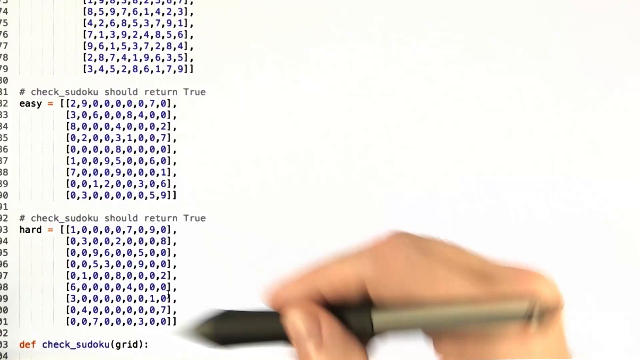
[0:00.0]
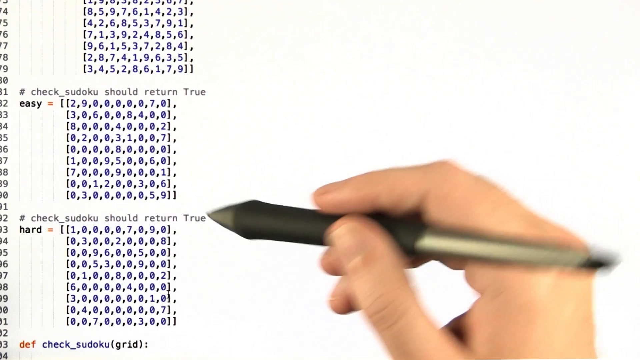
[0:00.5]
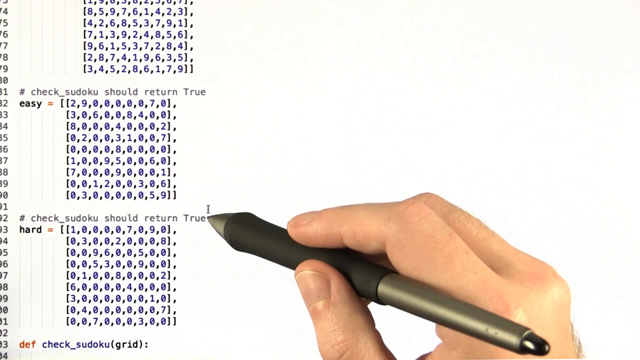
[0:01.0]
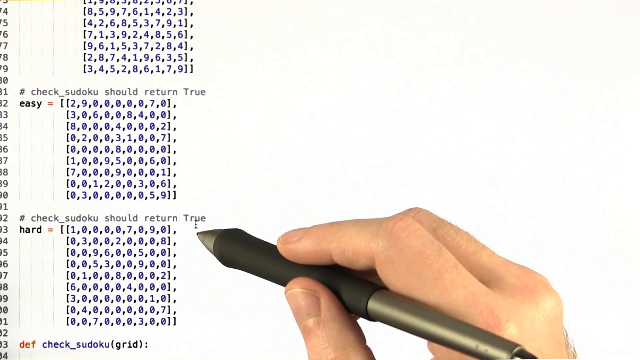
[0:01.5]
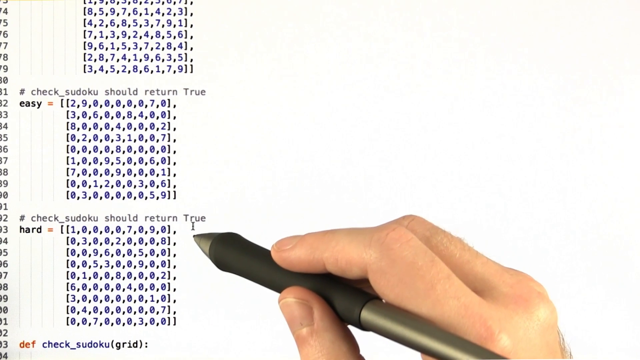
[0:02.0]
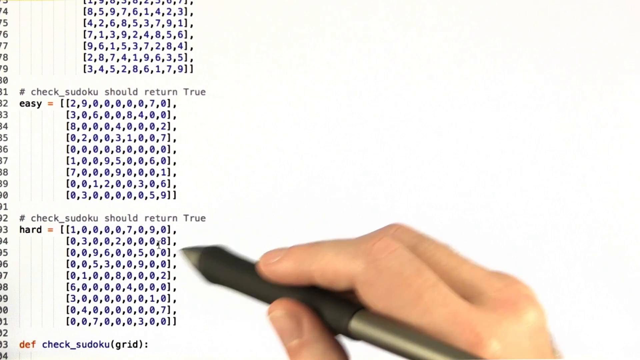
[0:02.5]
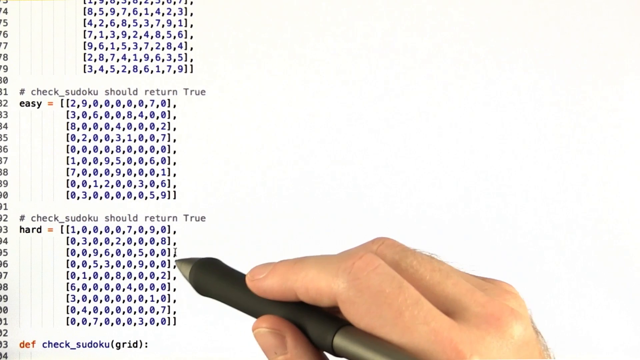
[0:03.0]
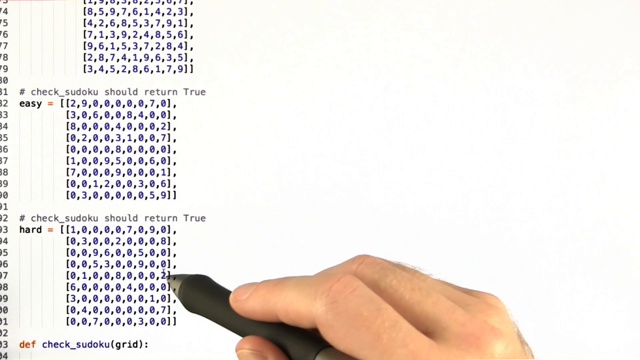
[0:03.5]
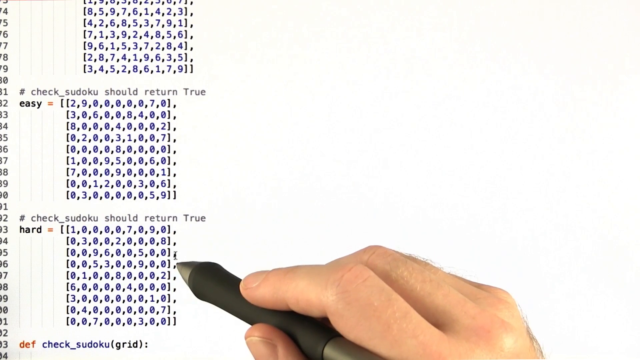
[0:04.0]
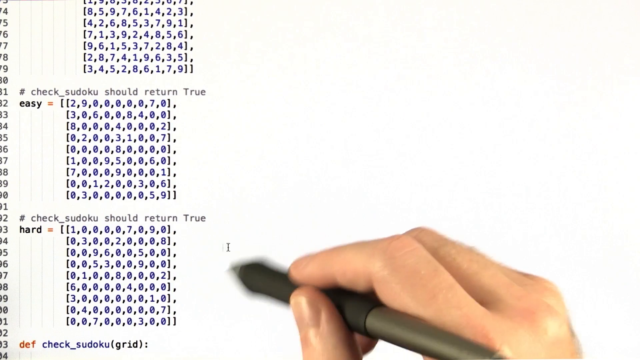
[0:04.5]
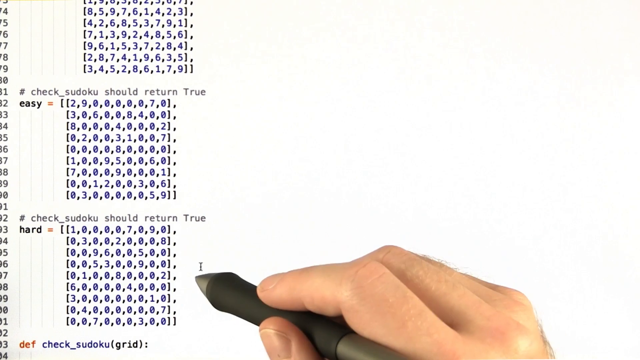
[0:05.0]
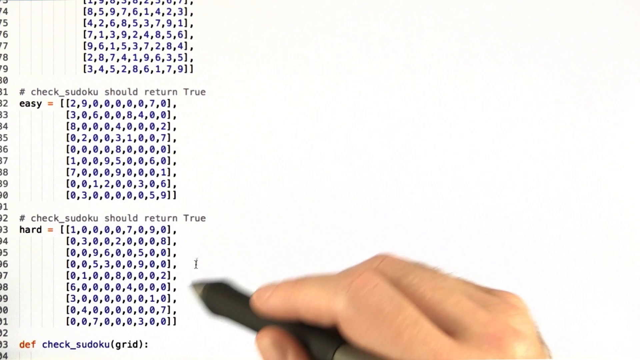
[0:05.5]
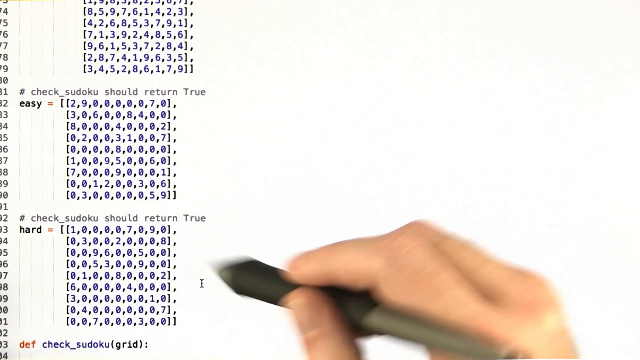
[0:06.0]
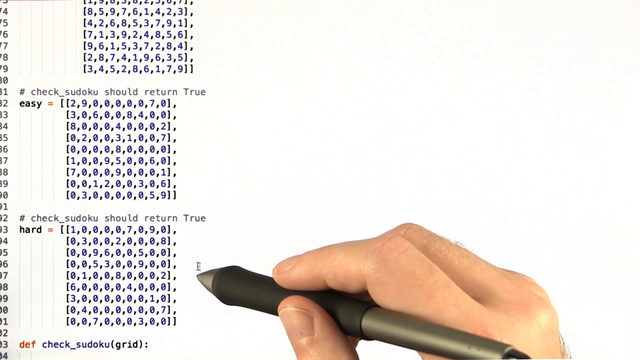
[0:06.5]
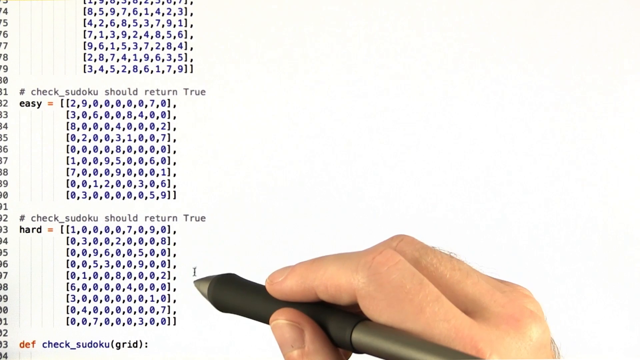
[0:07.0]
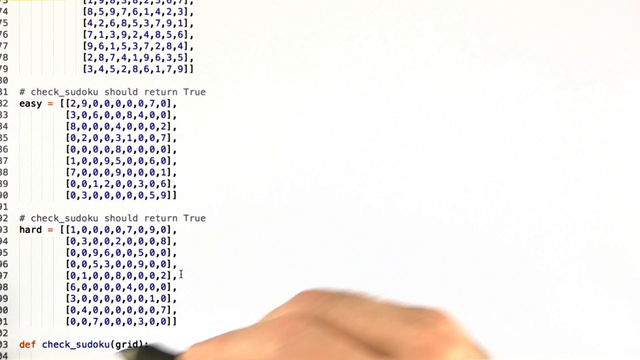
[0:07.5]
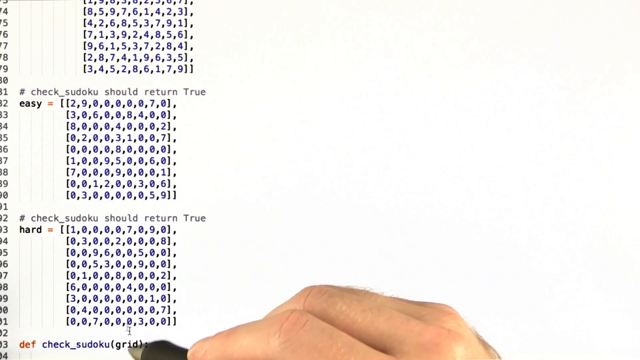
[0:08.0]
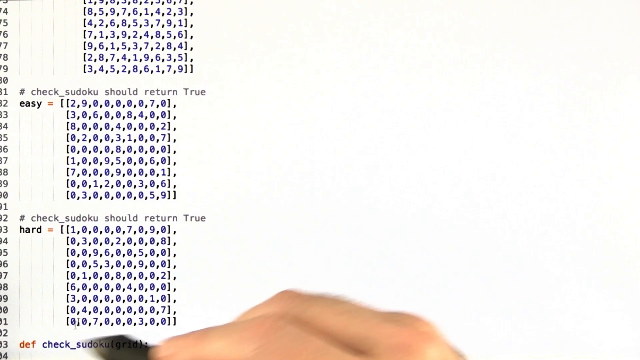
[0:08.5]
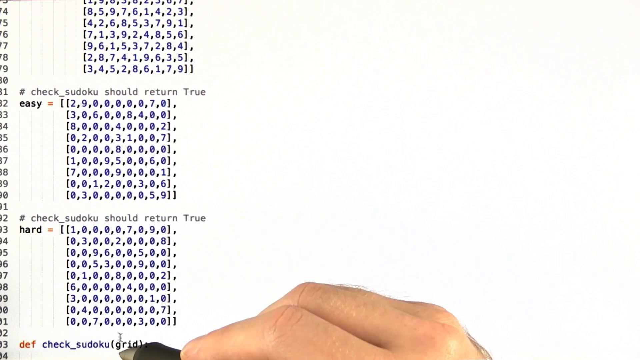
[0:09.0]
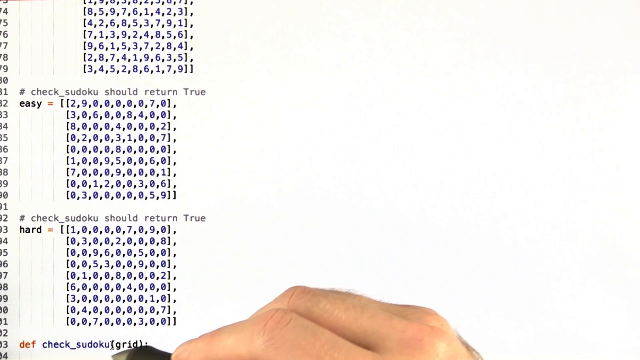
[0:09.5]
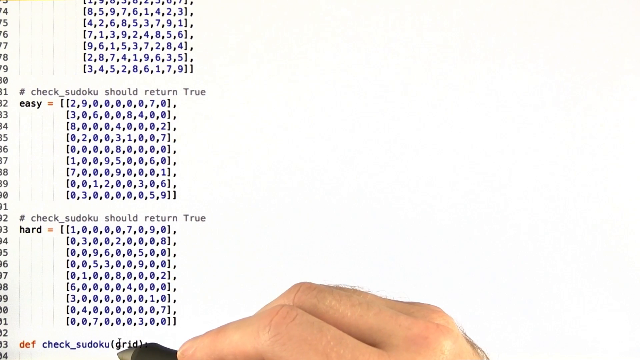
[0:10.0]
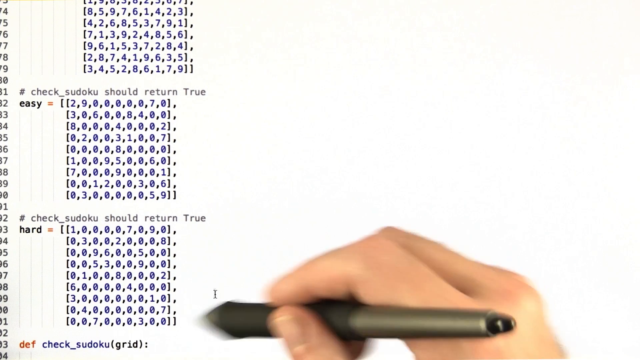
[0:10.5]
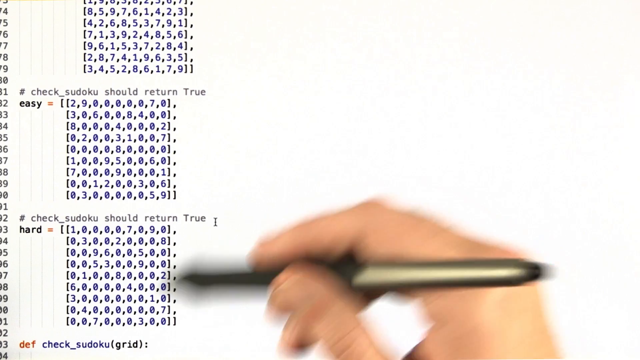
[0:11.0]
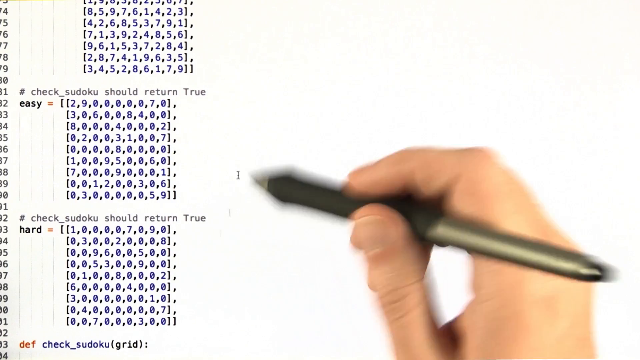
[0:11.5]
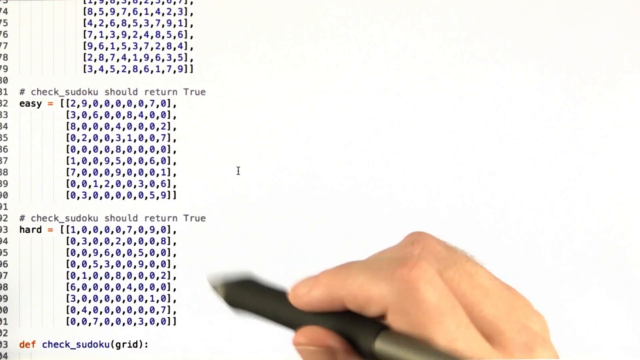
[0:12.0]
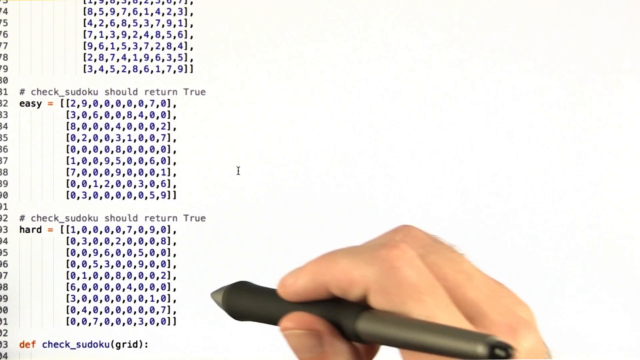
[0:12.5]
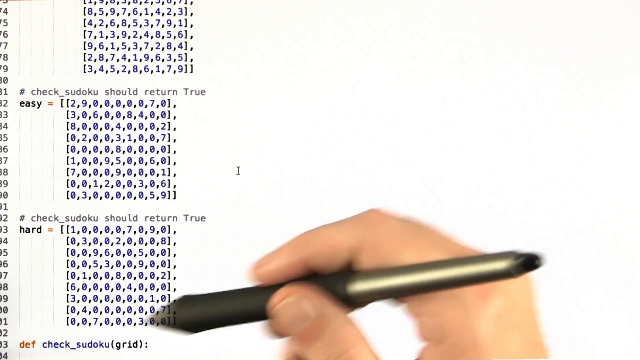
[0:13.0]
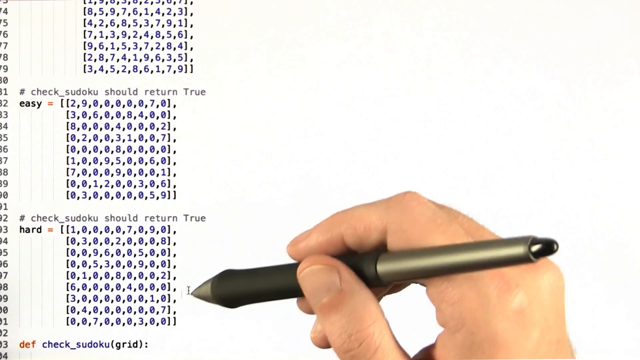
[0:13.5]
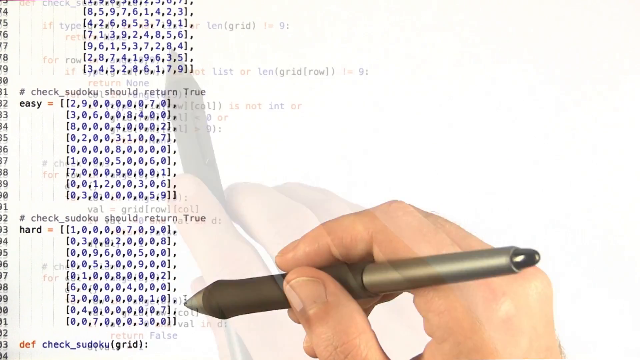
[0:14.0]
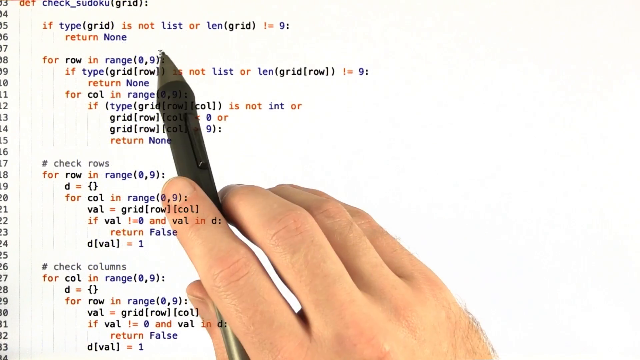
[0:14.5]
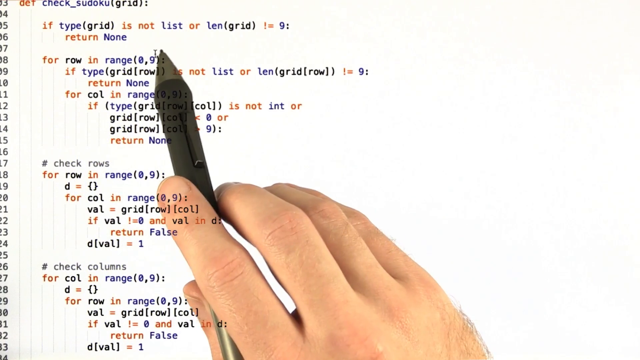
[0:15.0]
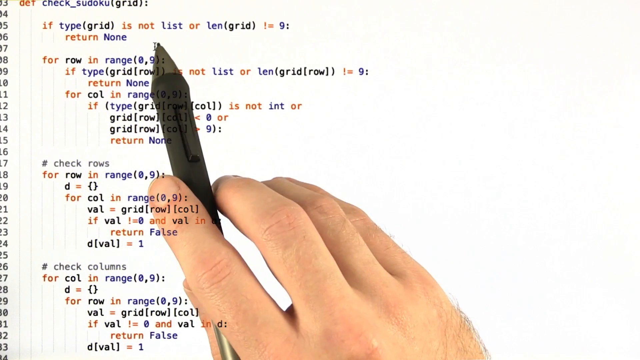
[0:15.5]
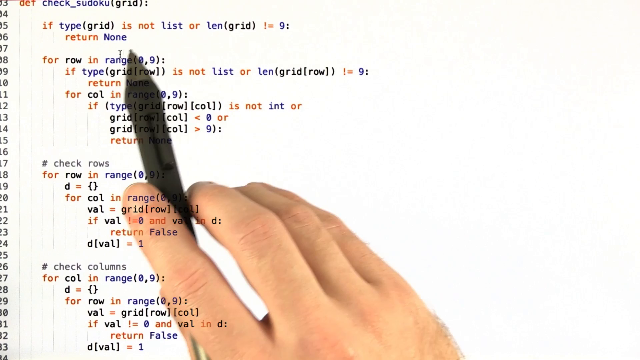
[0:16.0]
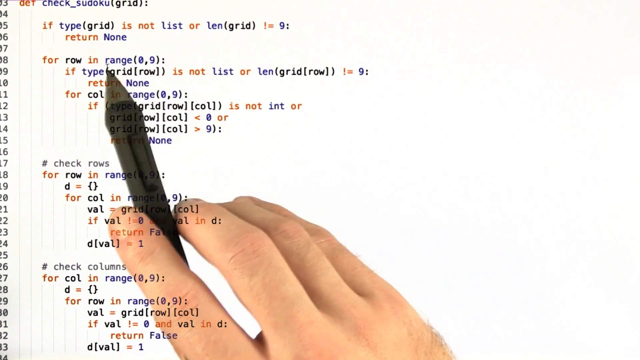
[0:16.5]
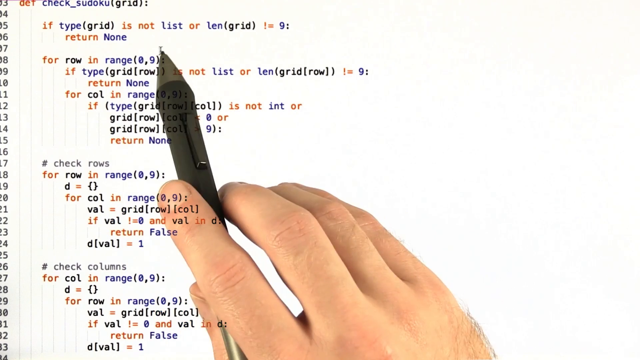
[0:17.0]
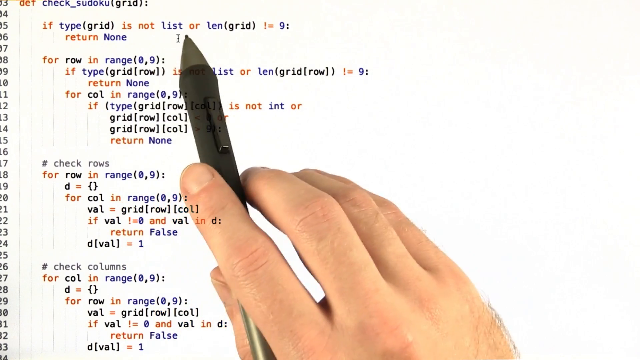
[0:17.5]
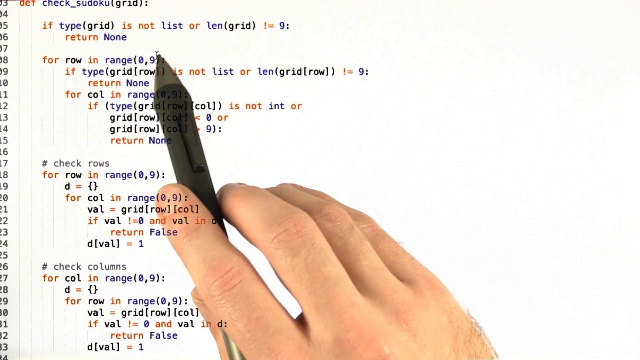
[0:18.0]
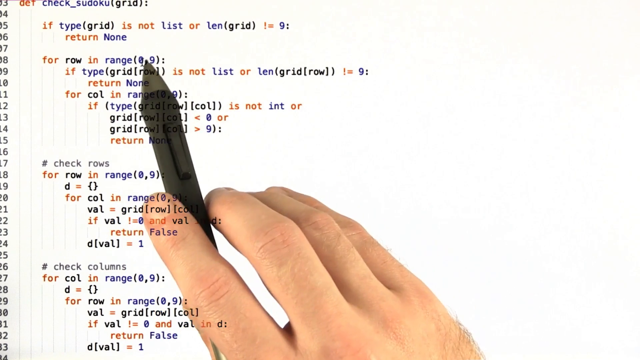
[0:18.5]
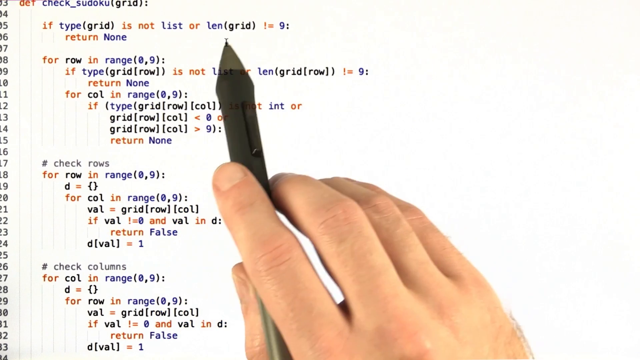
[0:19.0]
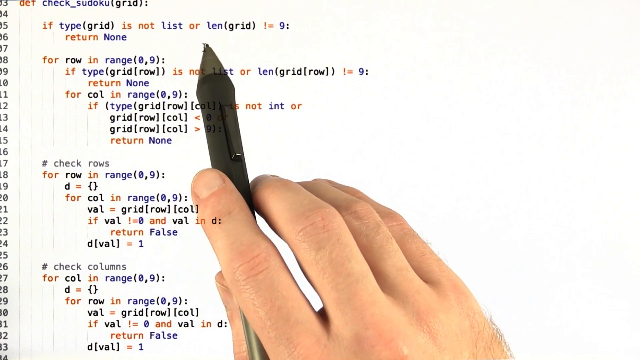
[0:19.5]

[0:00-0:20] A person holds what looks like a digital pen in their right hand and moves it around in front of a monitor. The monitor shows three separate grids of numbers, with the numbers separated by commas; each grid has 9 numbers across and 9 numbers down. Right above each grid the text reads "check Sudoku should return true", and underneath, to the left of the first row of each grid, it says "easy" or "hard". After roughly 5 to 10 seconds on the grids, the image transitions to one that still shows the person holding the digital pen but focuses on code: several lines of code, including some if/else or if/then statements. This view lasts probably about two to three seconds before the video stops.